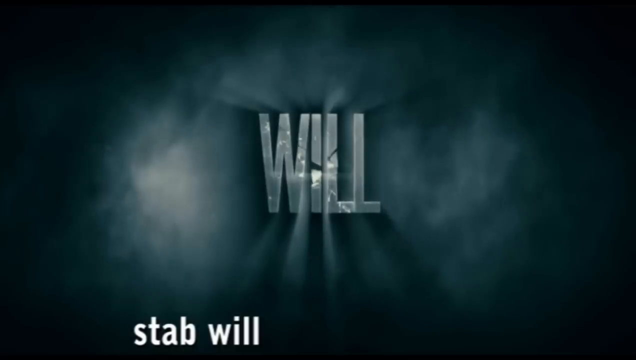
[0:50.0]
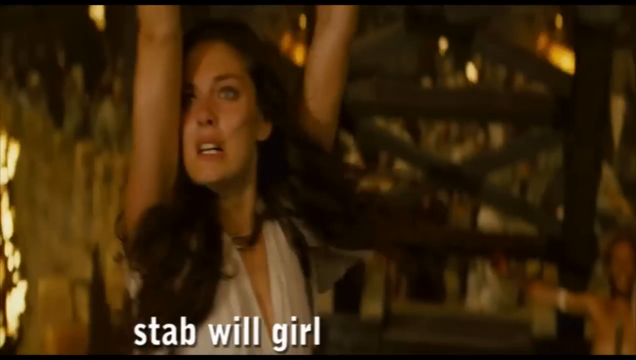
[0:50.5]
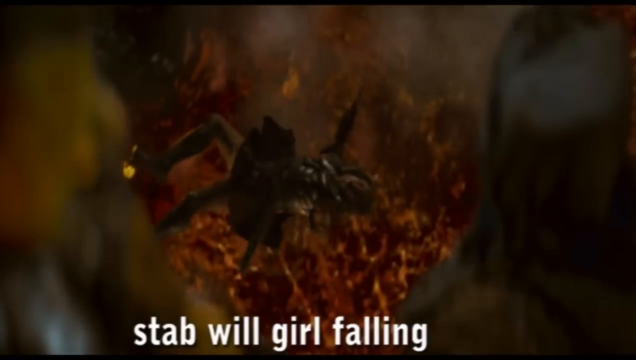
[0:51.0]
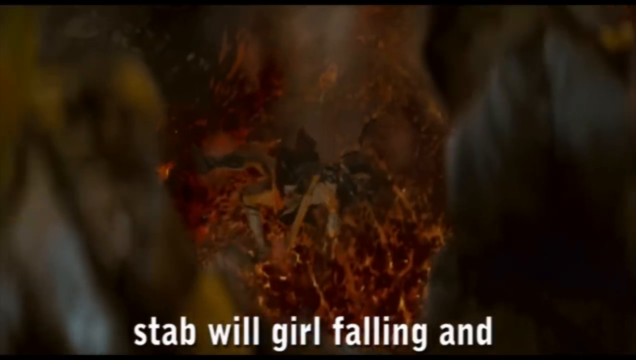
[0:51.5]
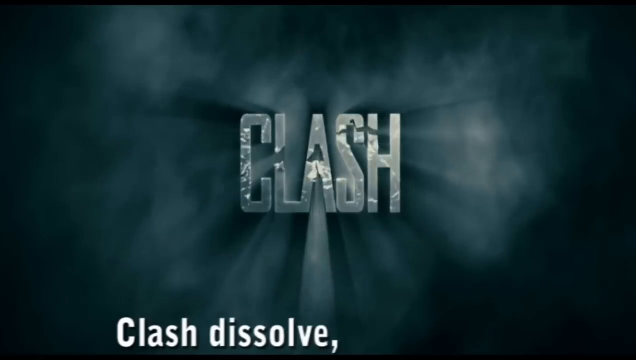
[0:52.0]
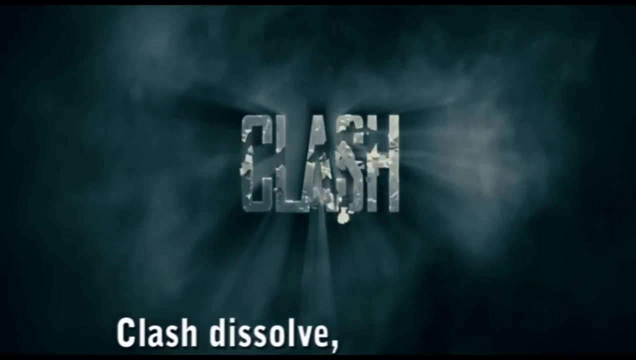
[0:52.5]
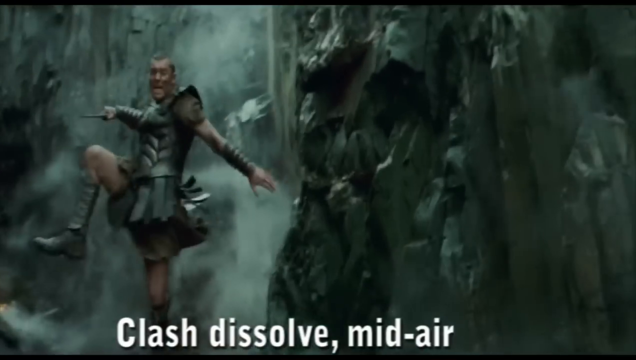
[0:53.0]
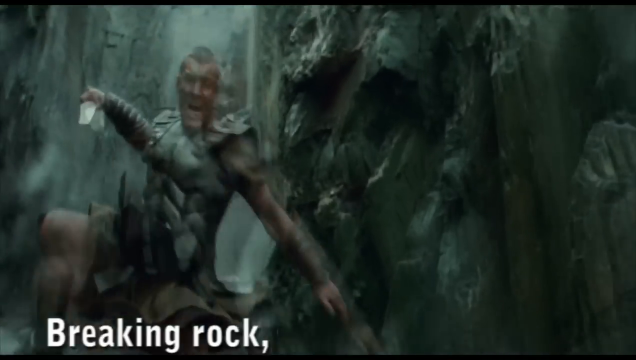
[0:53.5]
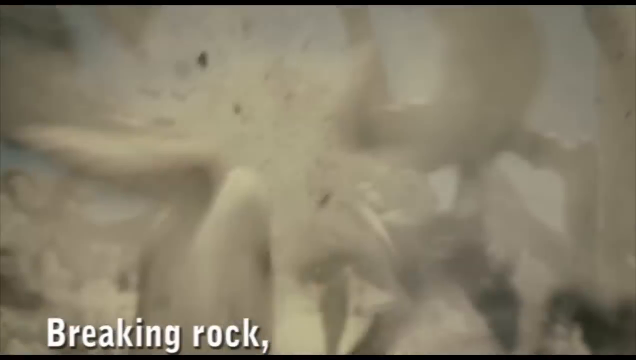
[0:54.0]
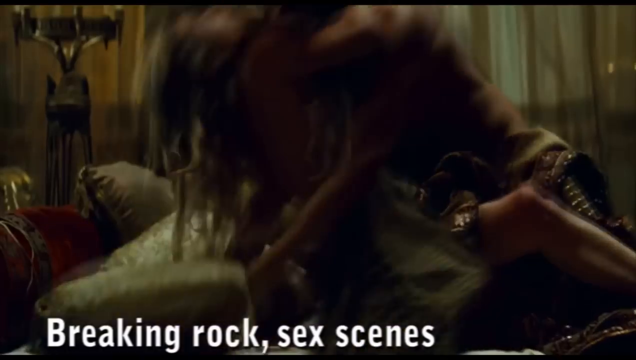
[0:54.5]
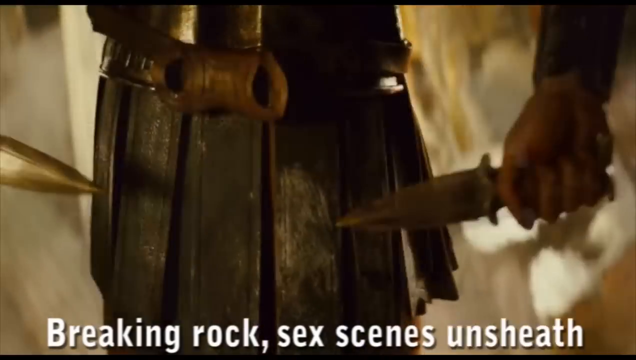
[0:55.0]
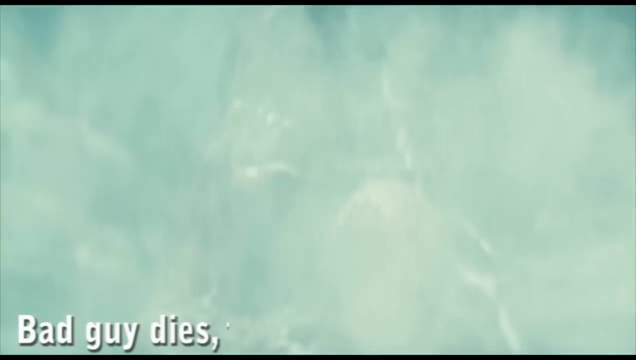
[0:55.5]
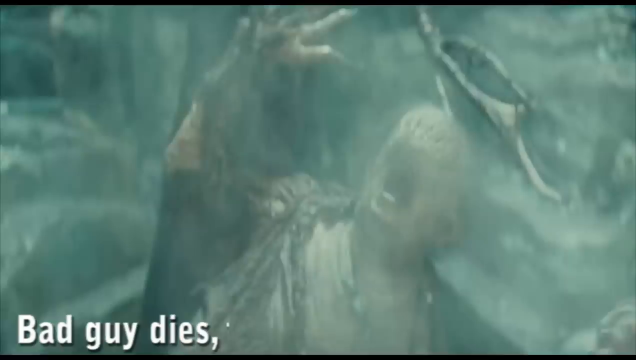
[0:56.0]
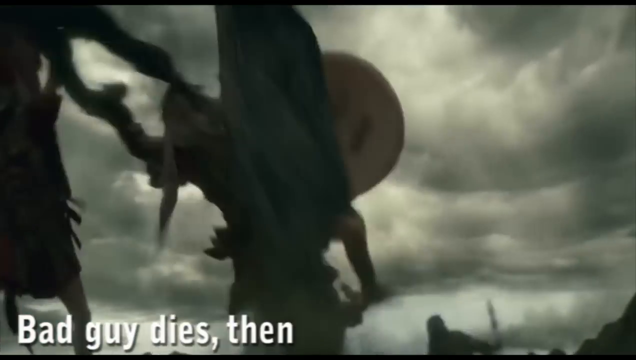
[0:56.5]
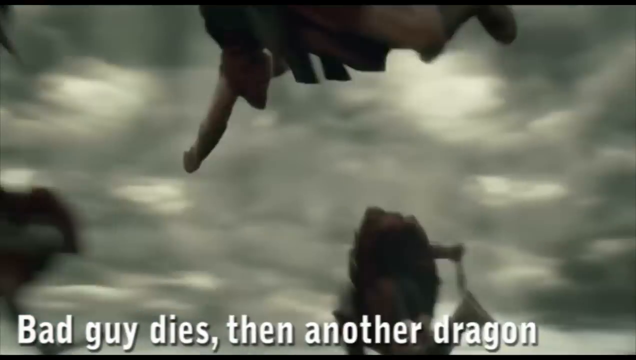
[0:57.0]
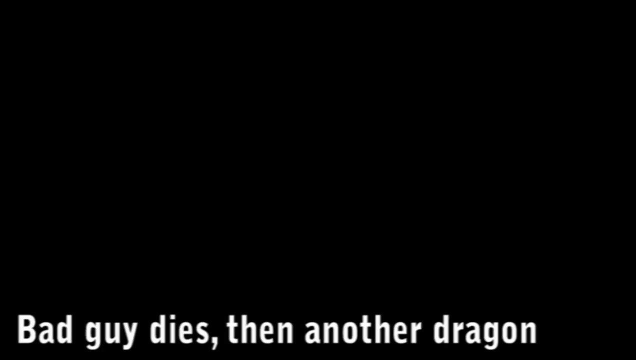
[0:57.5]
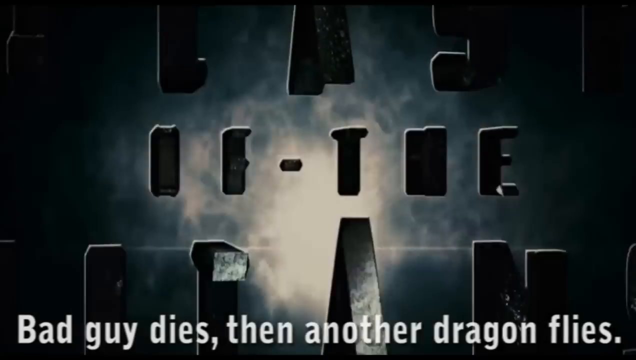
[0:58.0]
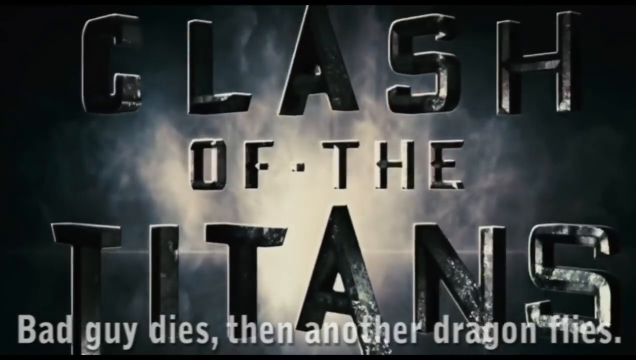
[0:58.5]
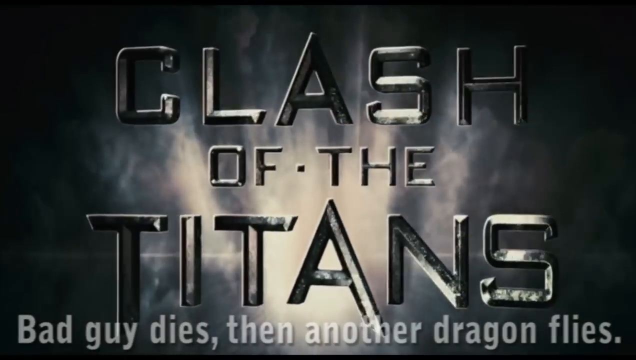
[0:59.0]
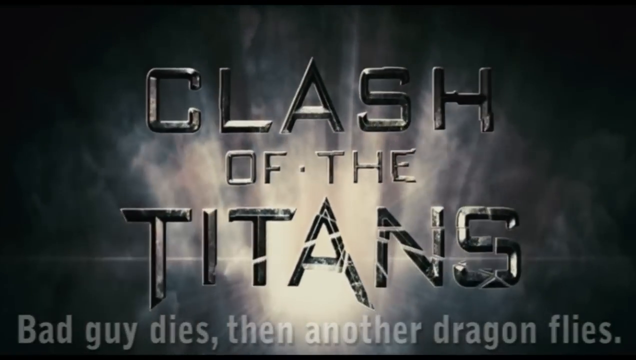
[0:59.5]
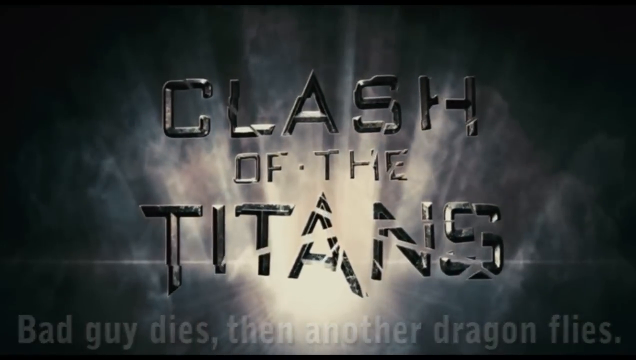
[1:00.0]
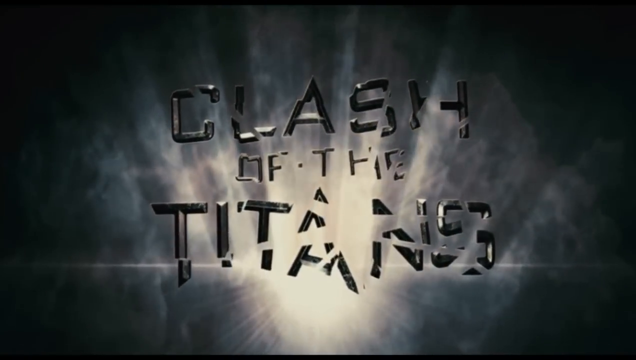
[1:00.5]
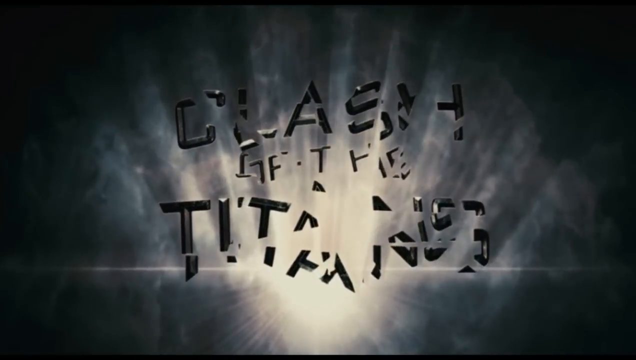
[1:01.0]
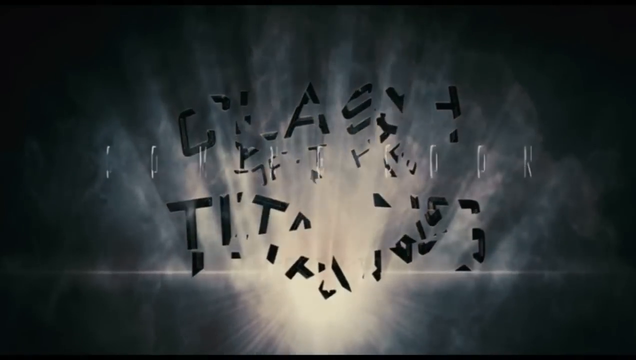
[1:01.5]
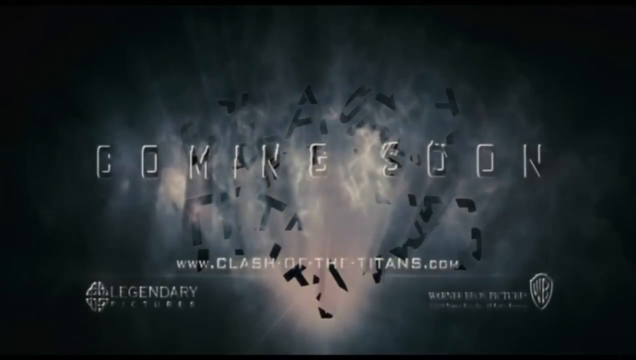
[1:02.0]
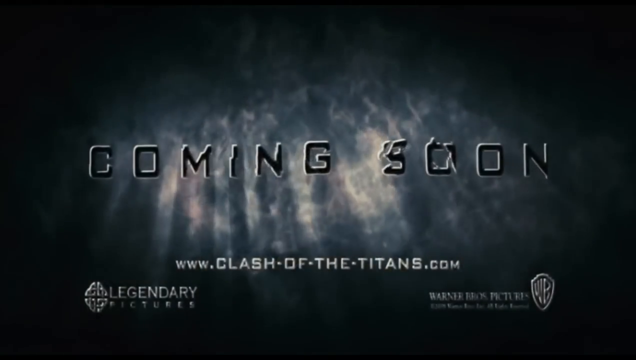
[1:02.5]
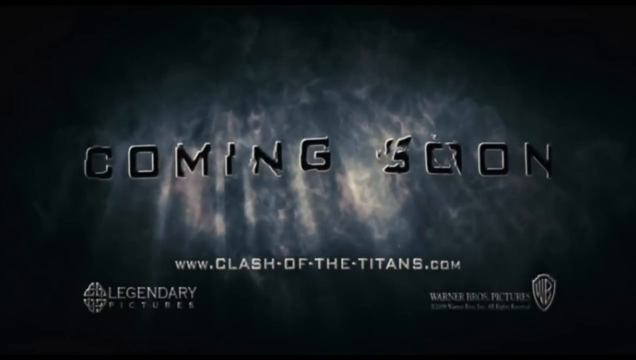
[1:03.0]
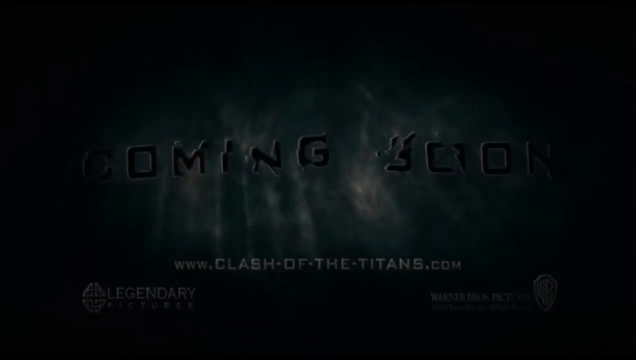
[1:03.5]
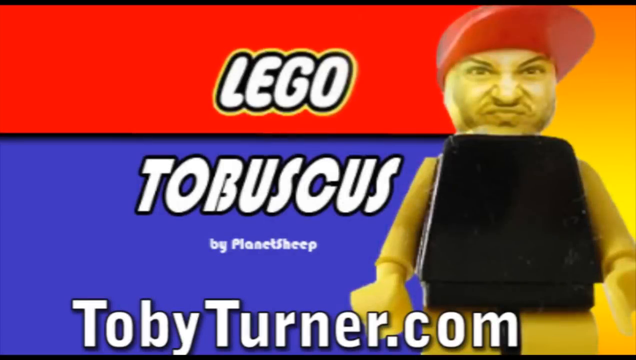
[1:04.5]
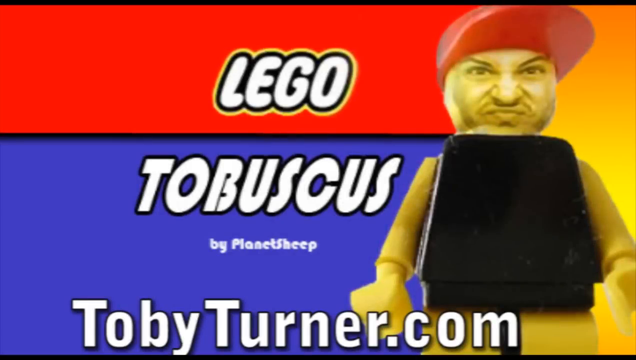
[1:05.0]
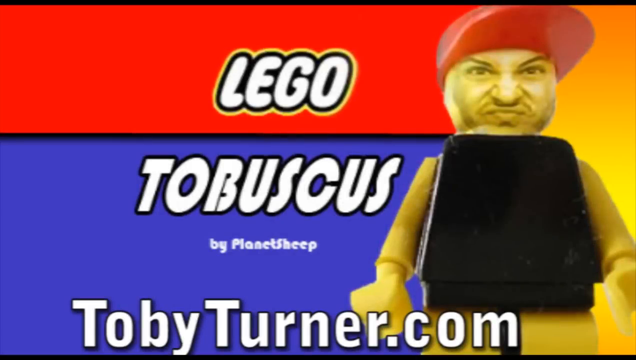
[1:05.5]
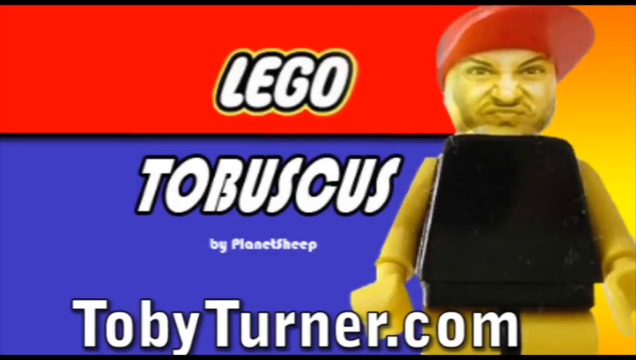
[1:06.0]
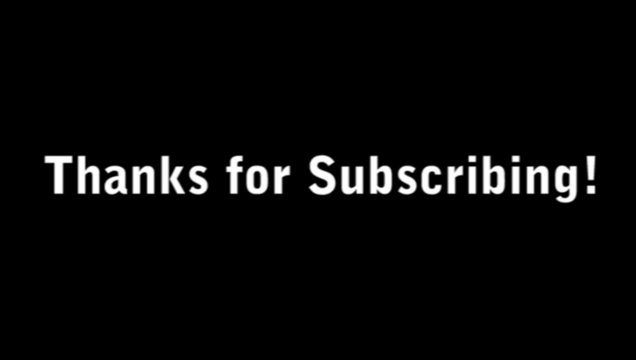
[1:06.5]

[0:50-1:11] The word "Will" appears on the screen, followed by a man falling into a lake of fire. Then the word "Clash" appears with a subtitle that says "Clash dissolve" in bright white text. A man leaps from a high elevation with a sword in his hand, one knee bent as he is in the air. A subtitle says "Clash dissolve, mid-air style" in white. There is a blast, and then two couples are on a bed, hugging each other and seemingly making love. In very fast-paced motion a man appears, and the video suddenly cuts to a dragon grabbing a soldier and flipping him over. The words "Clash of the Titans" flash on the screen, and the letters disintegrate as new words flash up saying "Coming soon." A screen says "Let go" in white on a red background, and "Turboskulls" is written in white on a blue background. There is an image of a man wearing a red hat whose body is Lego-shaped, with the text "Turboturner.com" in white at the bottom of the screen. The video ends on text that says "Thanks for subscribing."